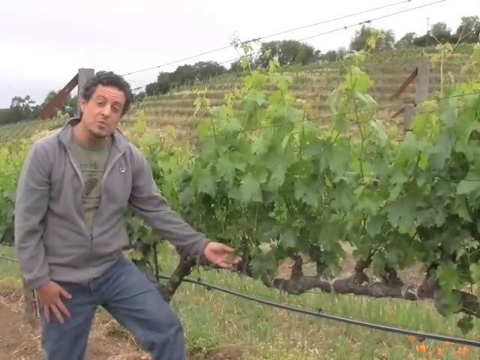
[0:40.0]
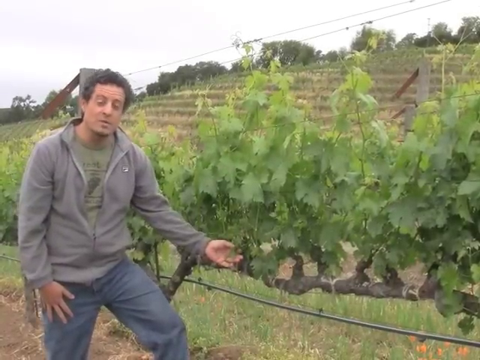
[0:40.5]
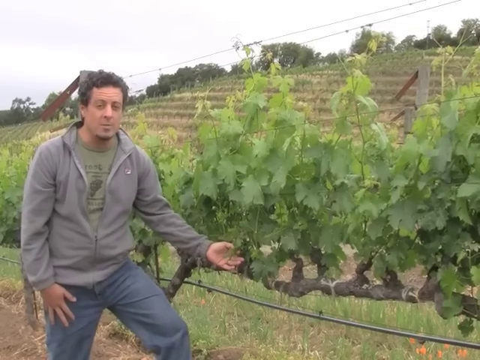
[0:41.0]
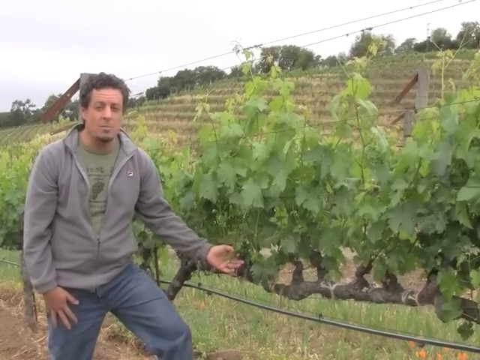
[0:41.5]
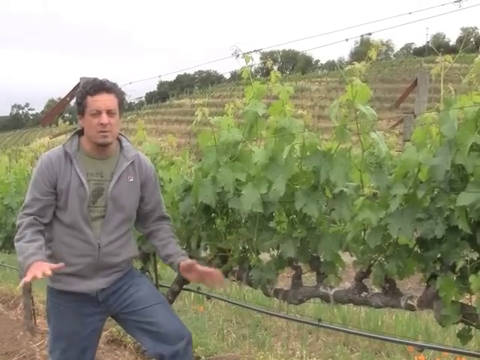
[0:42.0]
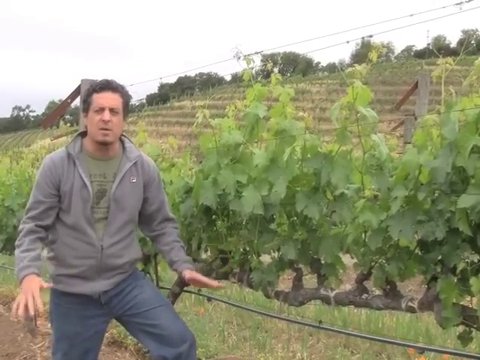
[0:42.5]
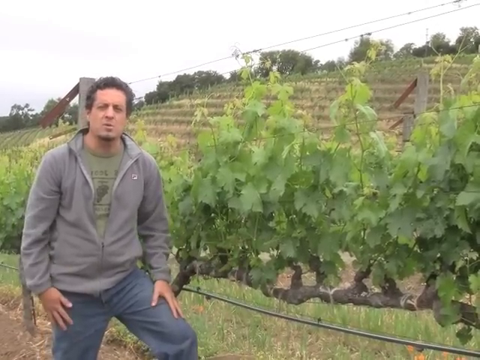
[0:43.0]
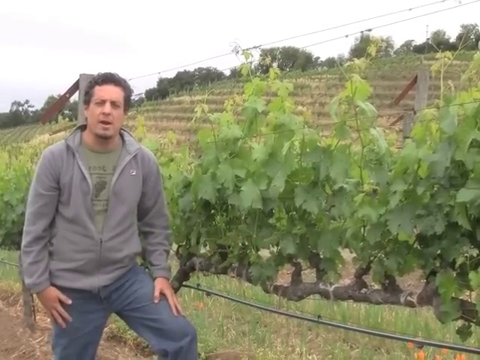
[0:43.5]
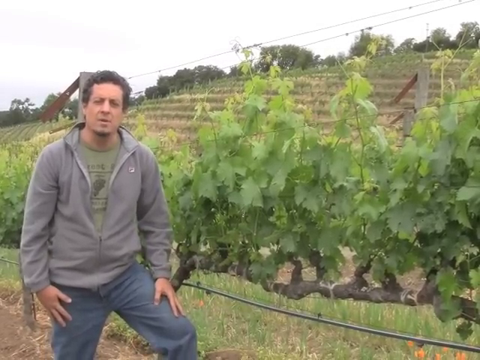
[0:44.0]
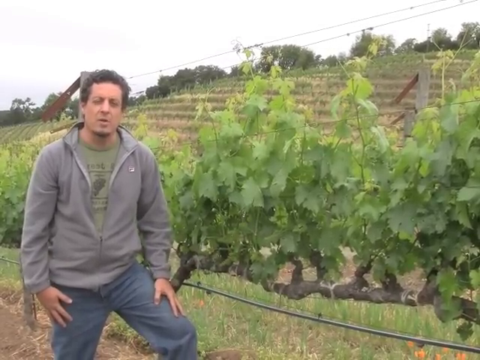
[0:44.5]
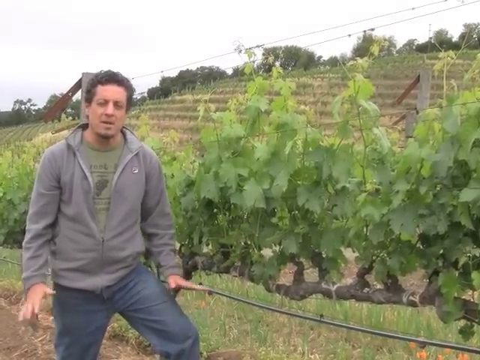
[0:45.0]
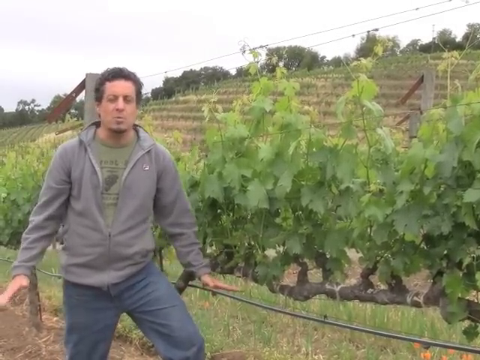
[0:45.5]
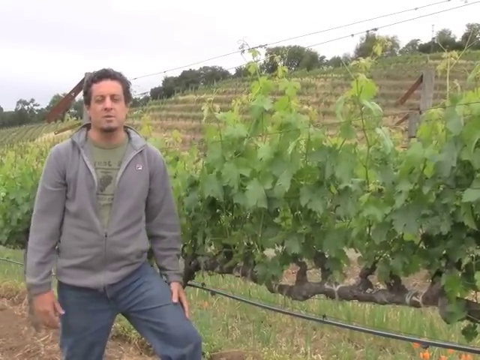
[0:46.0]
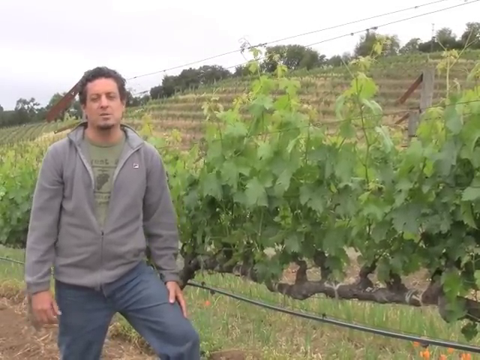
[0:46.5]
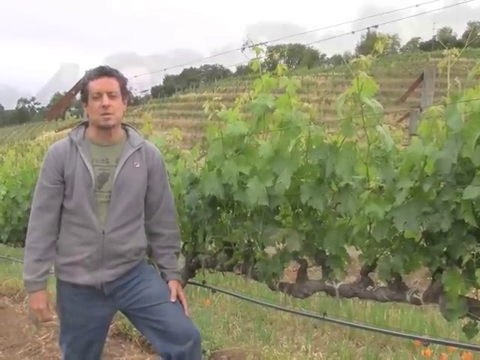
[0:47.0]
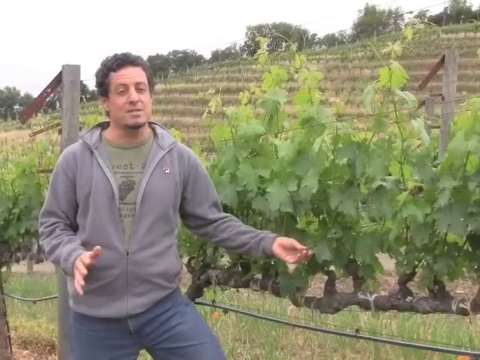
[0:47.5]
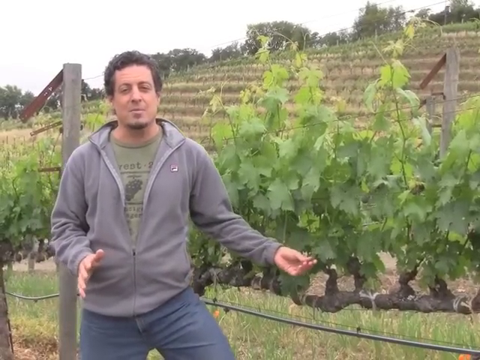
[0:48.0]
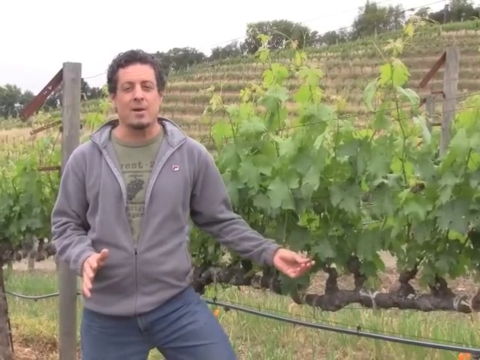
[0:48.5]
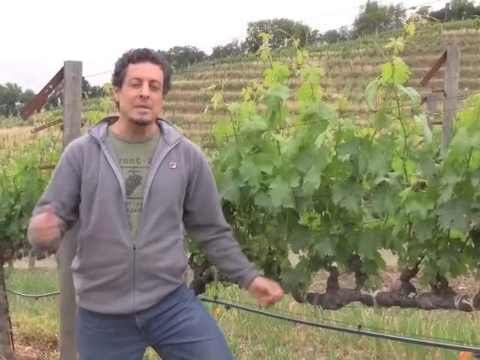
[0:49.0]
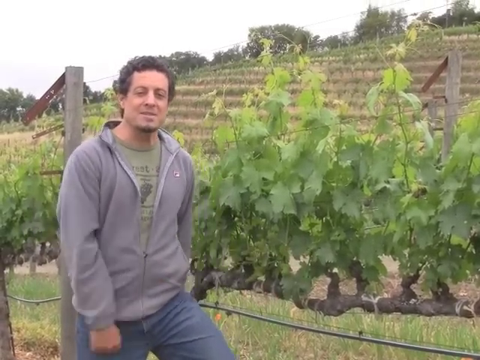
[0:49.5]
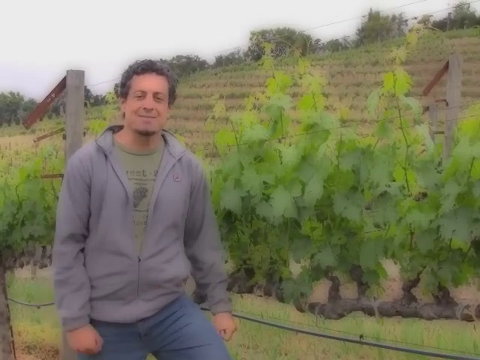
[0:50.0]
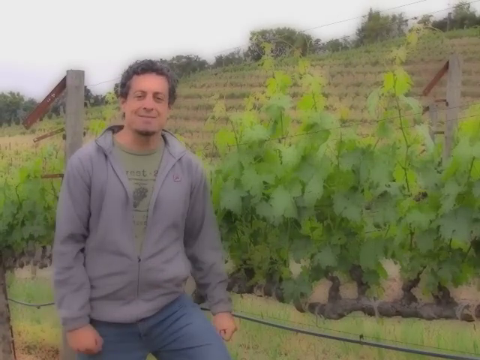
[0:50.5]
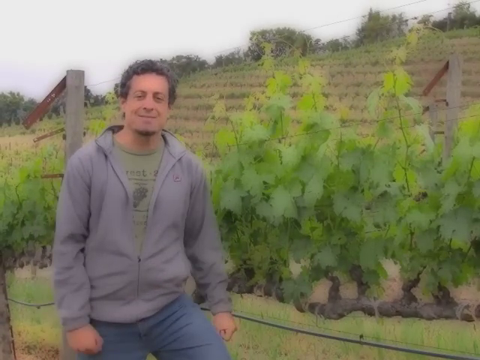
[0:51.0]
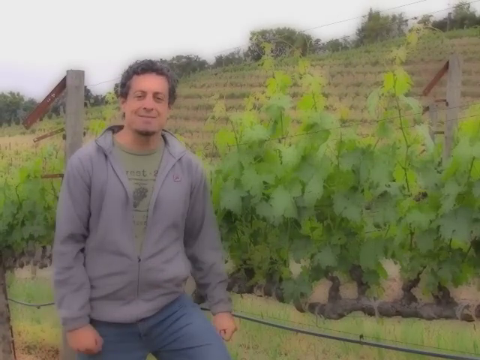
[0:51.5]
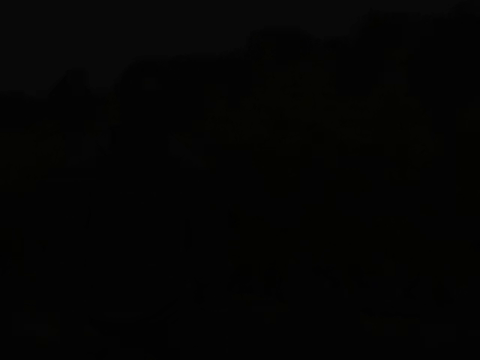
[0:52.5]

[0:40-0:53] The man stands in front of a grape plant from the family's winery. He is white, with curly black hair, and wears a gray zip-up hoodie, a green t-shirt, and blue jeans. He touches the leaves and is apparently talking, using his hands and moving them around a lot. At the end it shifts back from video to a photo, which is blurry and somewhat distorted, with a lot of gamma applied.